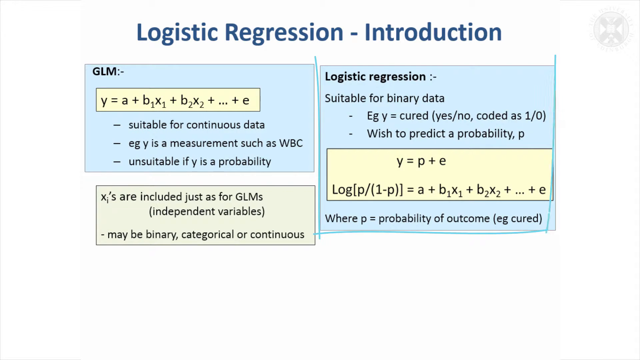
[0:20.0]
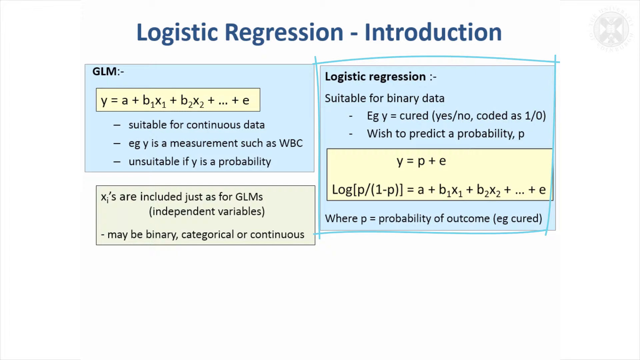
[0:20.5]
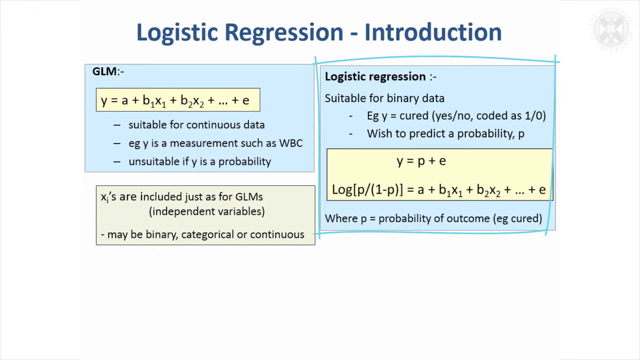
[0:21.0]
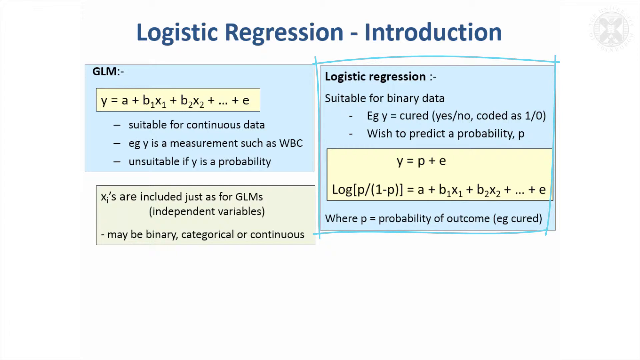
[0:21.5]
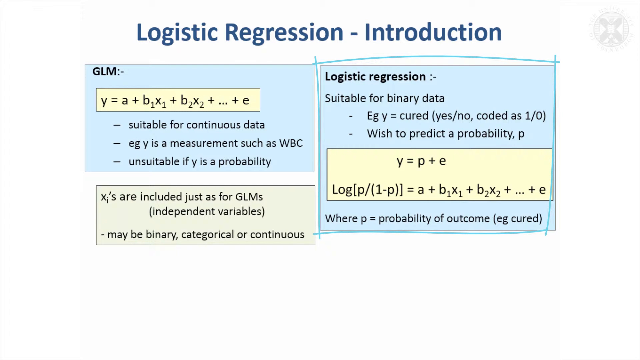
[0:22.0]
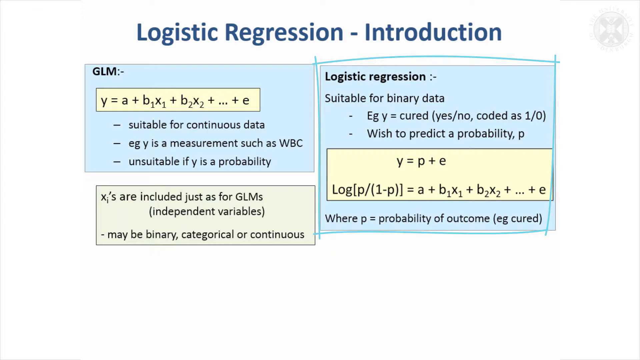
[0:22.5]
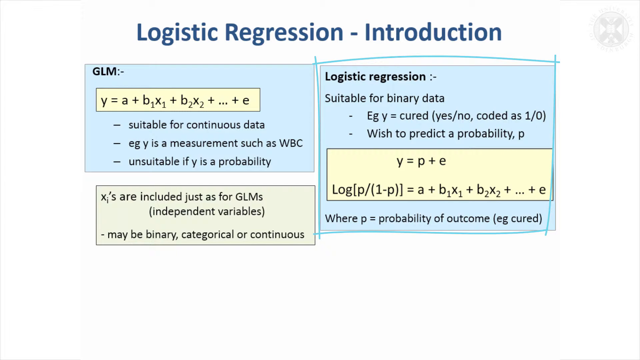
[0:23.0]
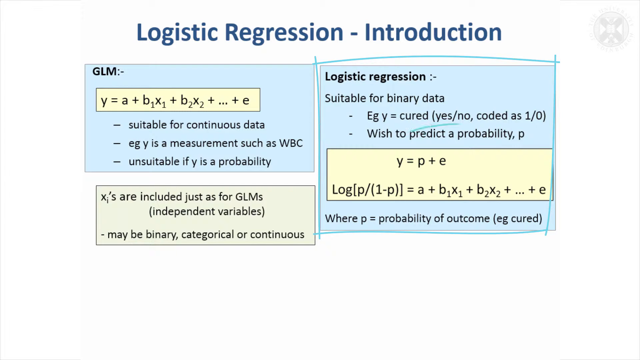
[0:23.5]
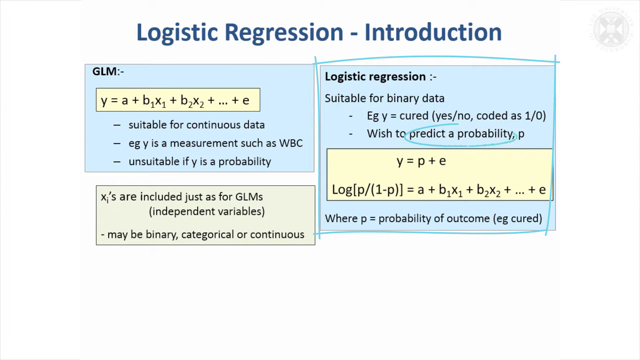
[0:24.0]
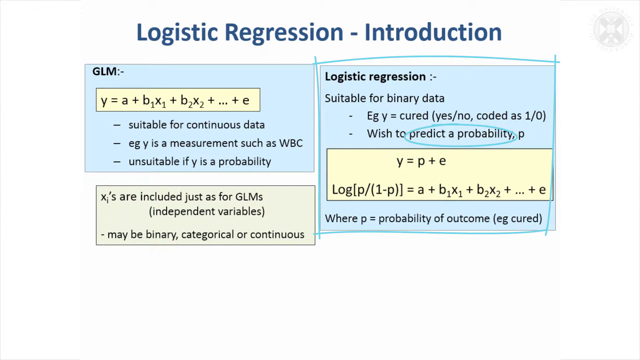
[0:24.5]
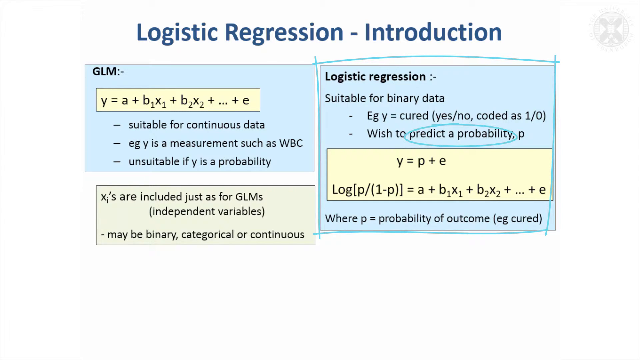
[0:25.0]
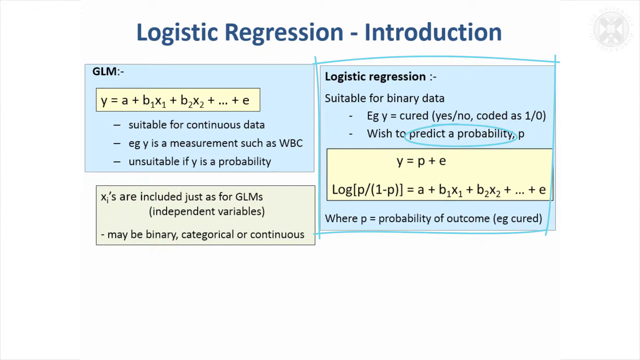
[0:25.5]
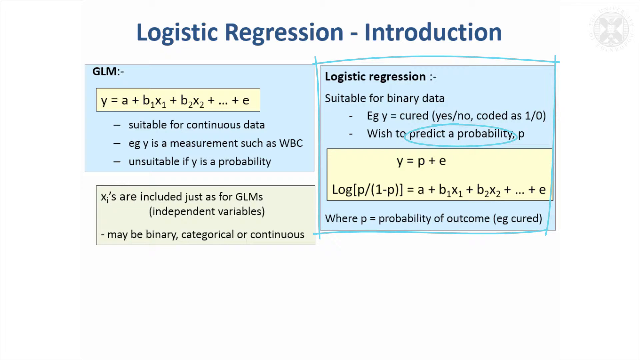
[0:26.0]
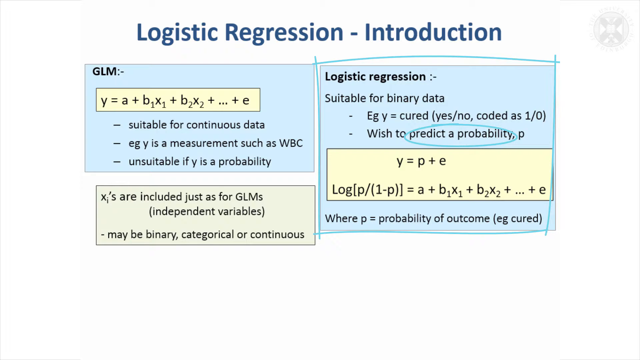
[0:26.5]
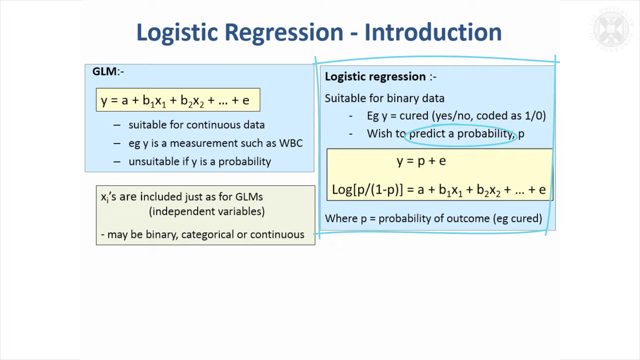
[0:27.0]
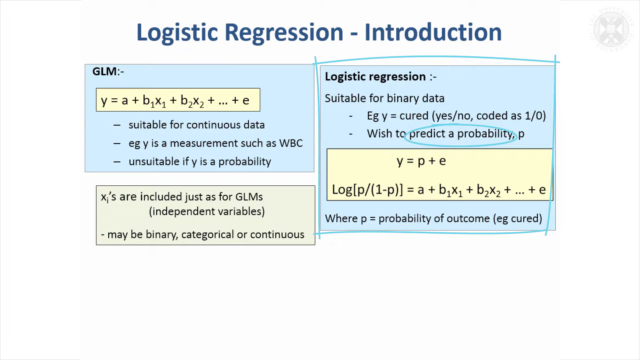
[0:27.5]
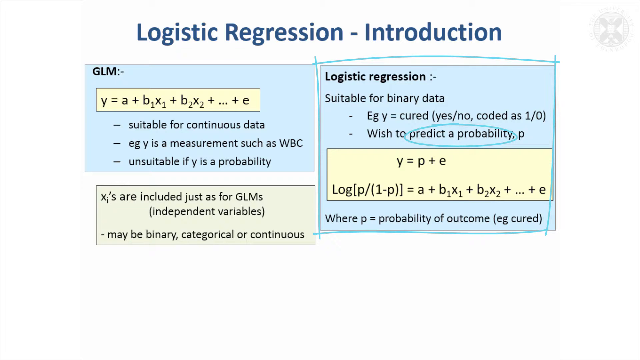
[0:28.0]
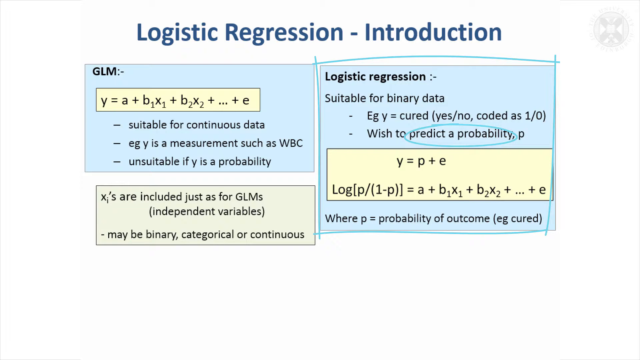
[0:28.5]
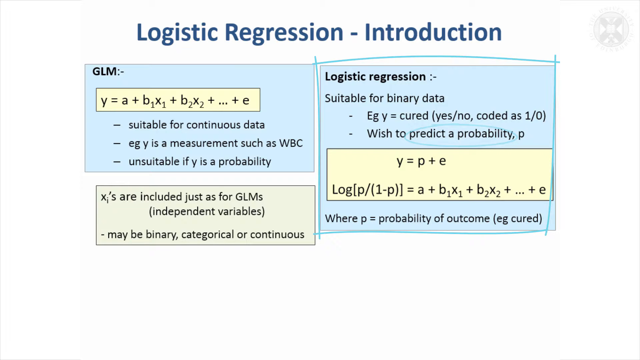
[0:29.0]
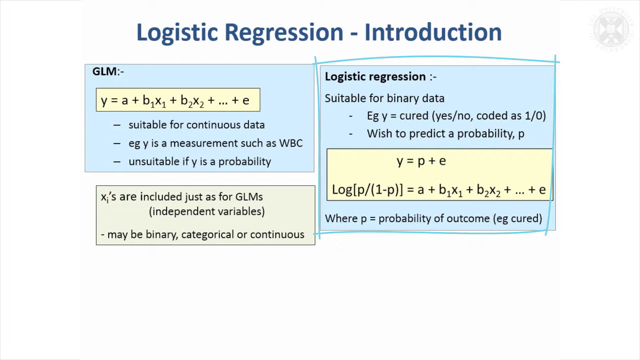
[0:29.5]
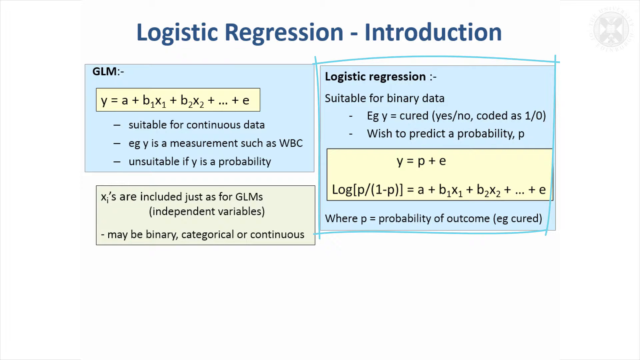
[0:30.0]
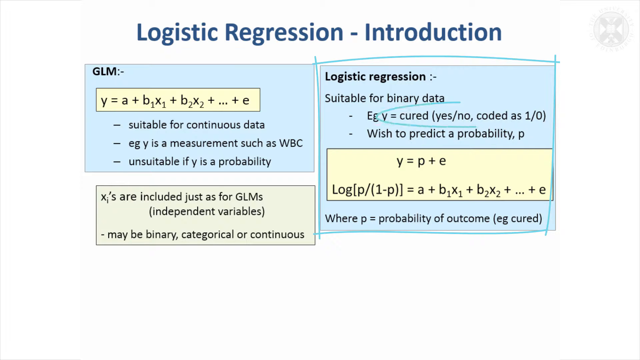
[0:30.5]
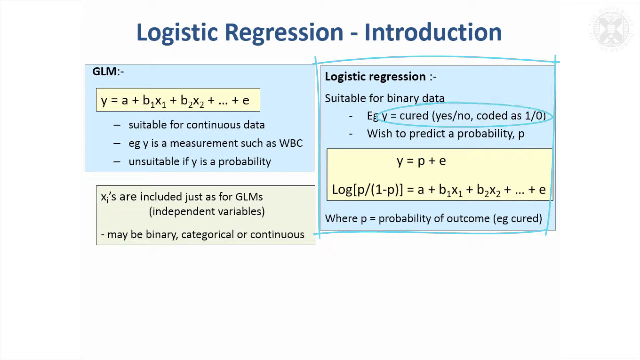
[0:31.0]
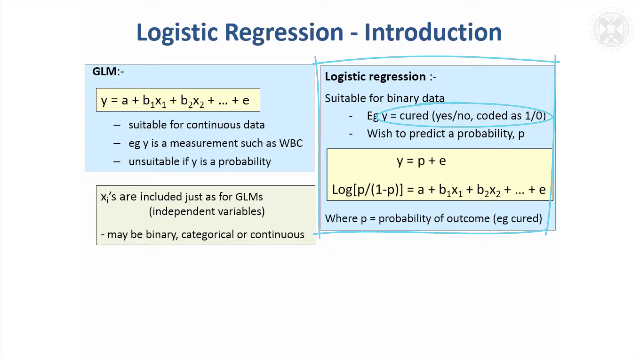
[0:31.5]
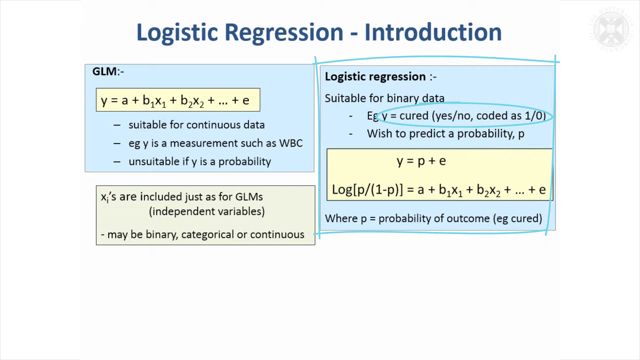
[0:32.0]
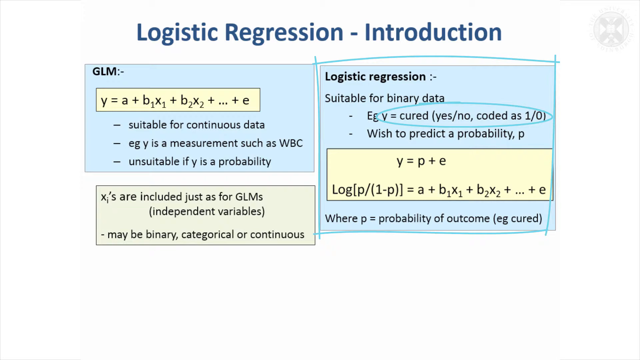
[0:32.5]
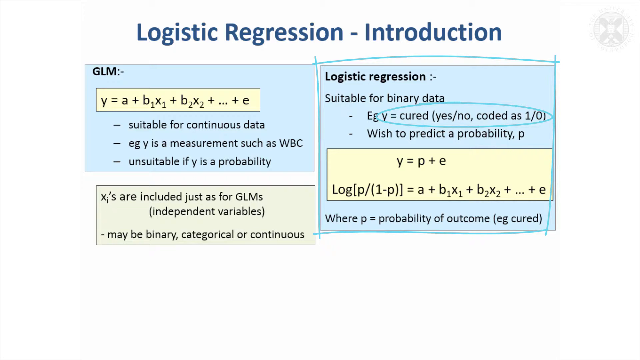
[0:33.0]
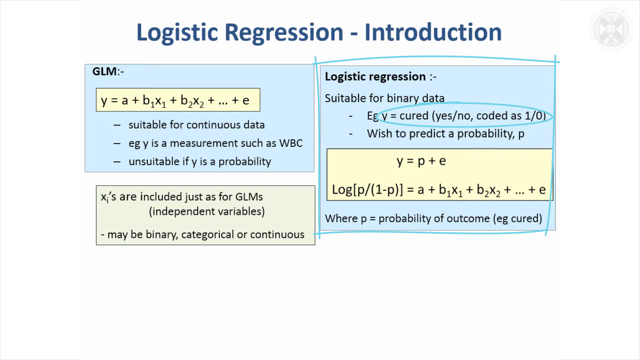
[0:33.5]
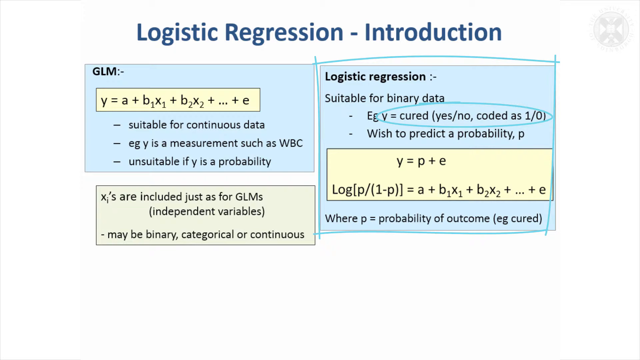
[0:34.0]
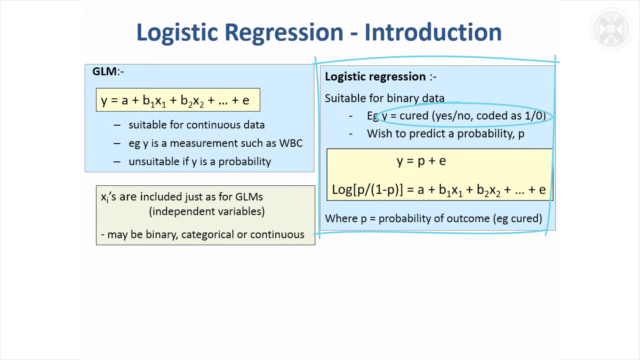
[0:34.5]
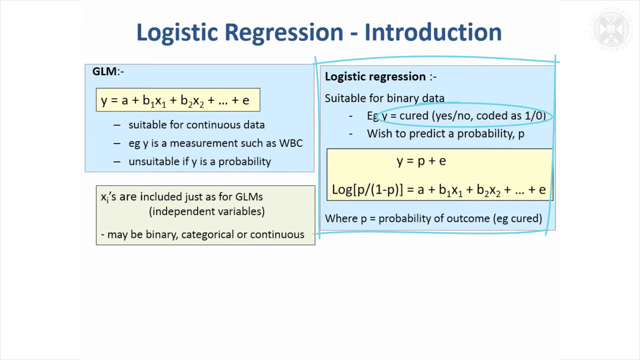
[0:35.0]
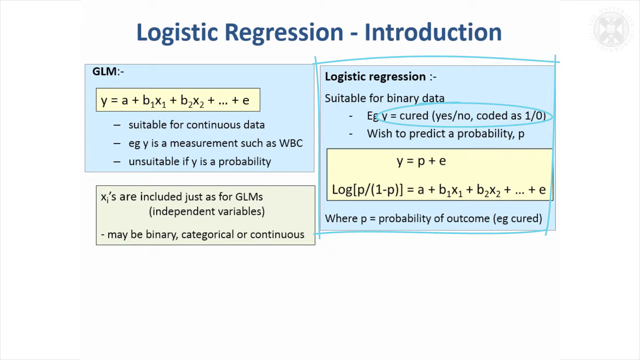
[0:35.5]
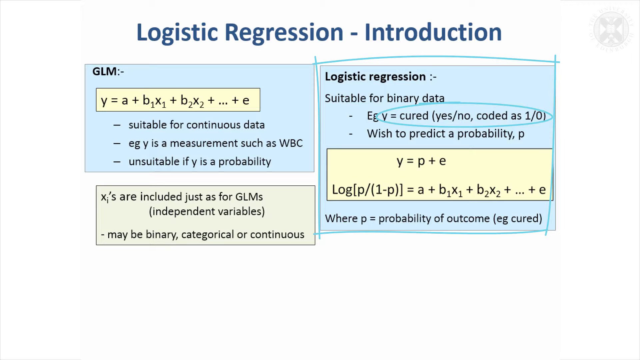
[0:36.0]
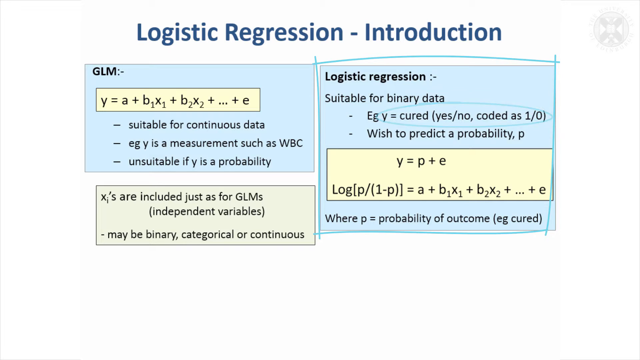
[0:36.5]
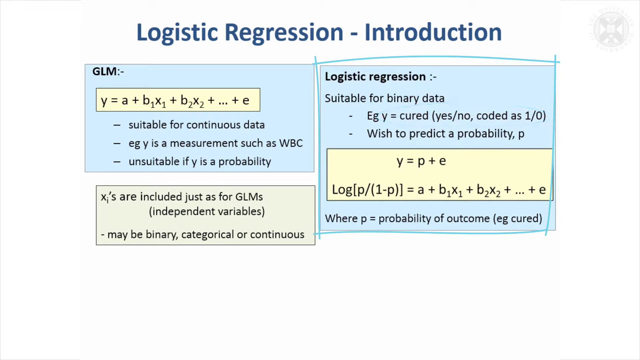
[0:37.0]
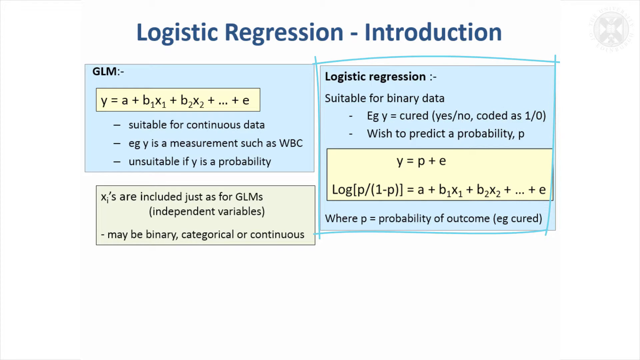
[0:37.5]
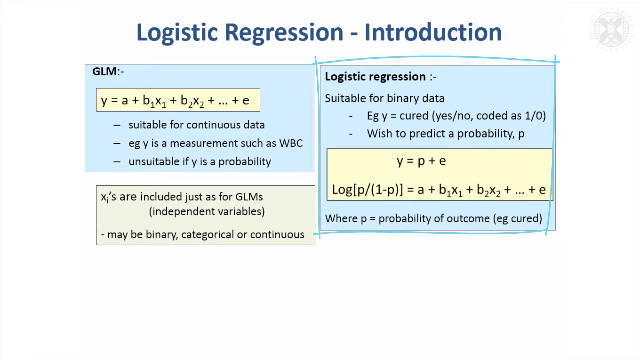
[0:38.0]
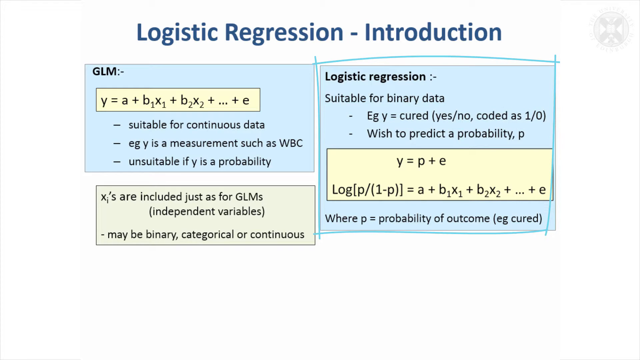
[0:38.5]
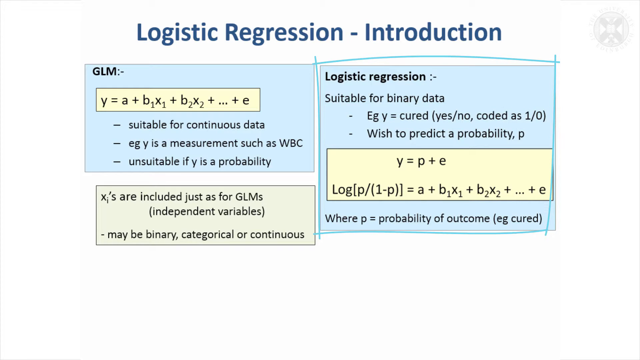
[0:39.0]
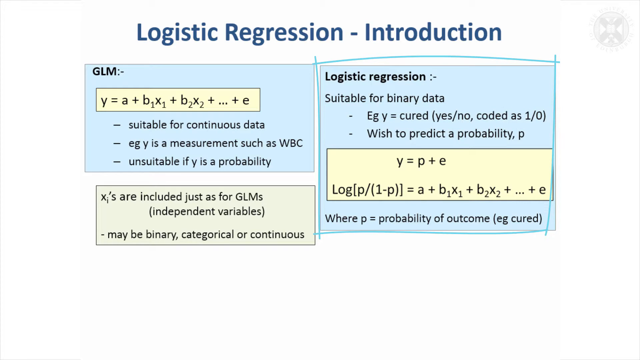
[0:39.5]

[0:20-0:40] The screen is titled logistic regression and shows the introduction. There are three tables. The first is a GLM table with the equation y = a + b1x1 + b2x2 + ... + e, followed by points reading "suitable for continuous data", "eg y is measurable such as wbc" and "unsuitable if y is a probability". The second table is titled logistic regression, with points including "suitable for binary data" and "wish to predict a probability p", and just below them the equation y = p + e. To the left of the second table is a smaller table reading "xi are included just as for GLMs" followed by the bracketed text "independent variables may be binary, categorical or continuous".